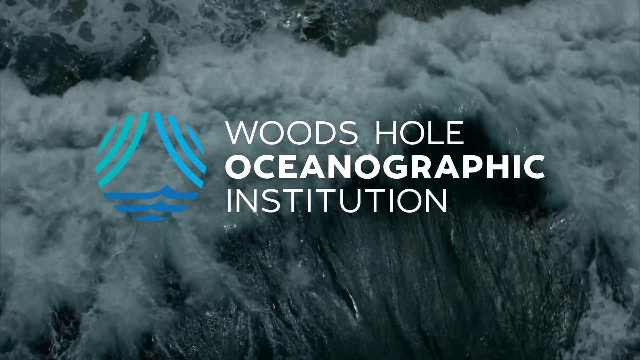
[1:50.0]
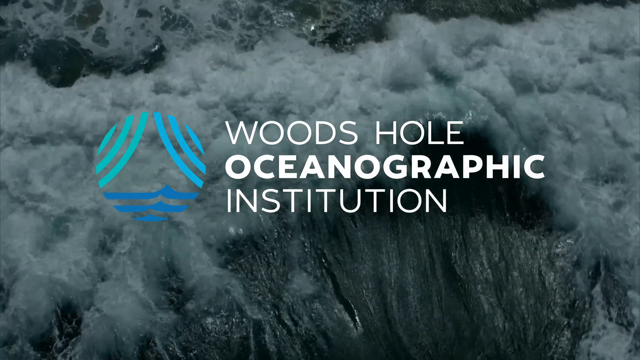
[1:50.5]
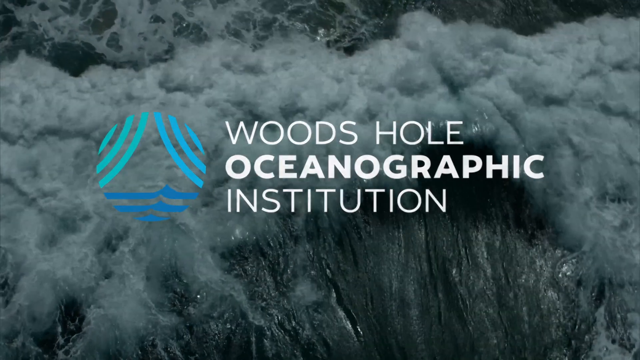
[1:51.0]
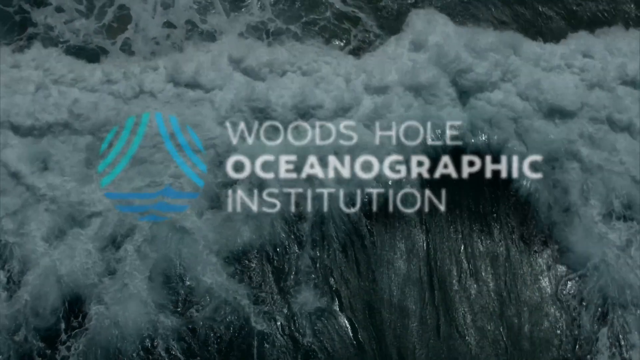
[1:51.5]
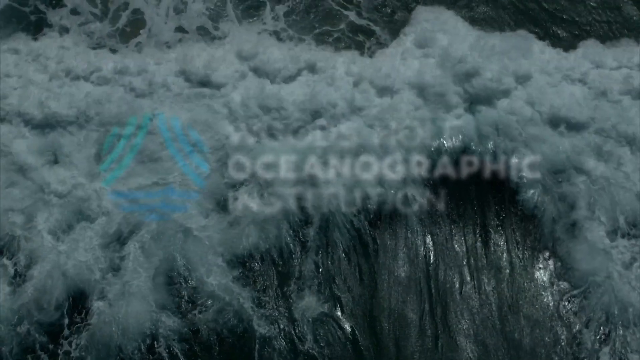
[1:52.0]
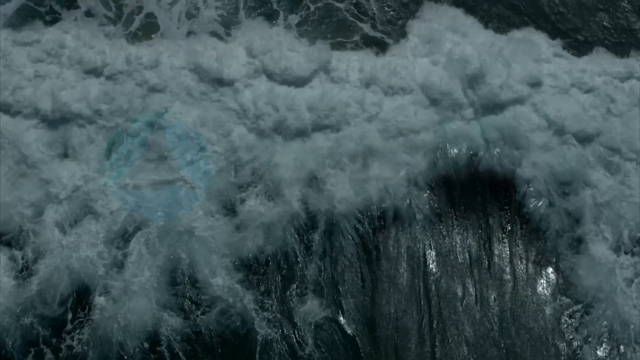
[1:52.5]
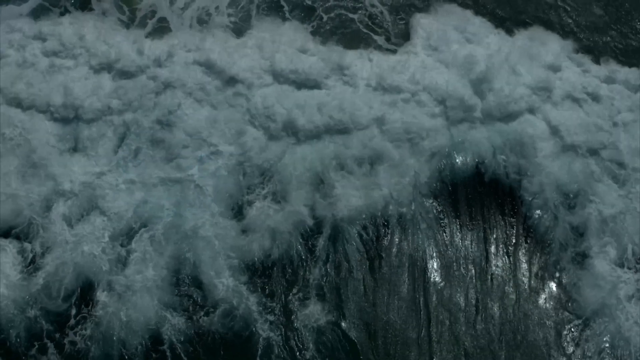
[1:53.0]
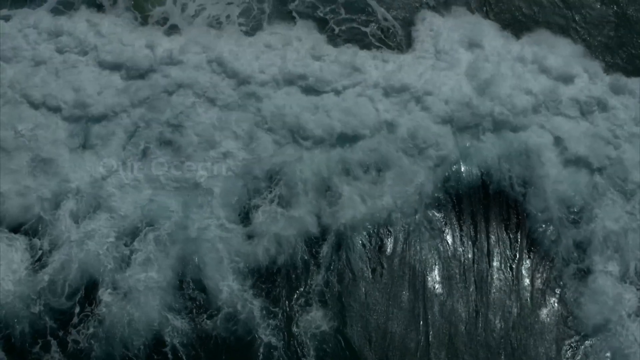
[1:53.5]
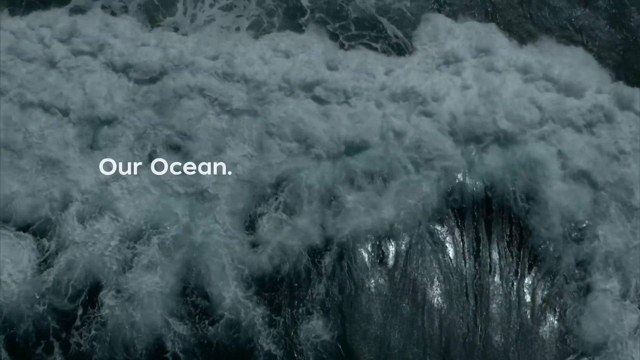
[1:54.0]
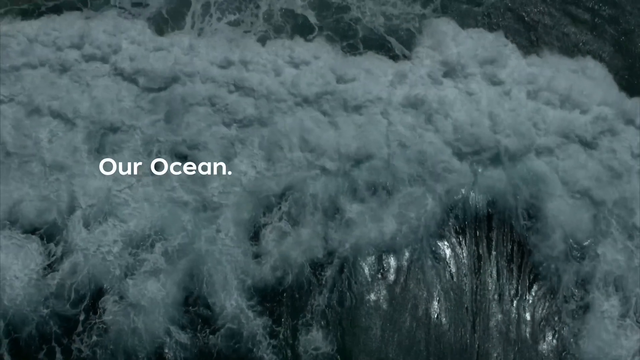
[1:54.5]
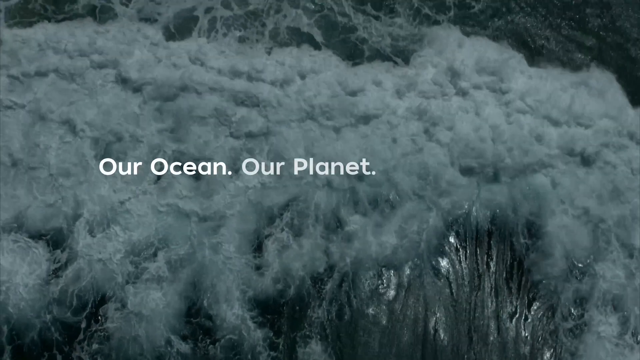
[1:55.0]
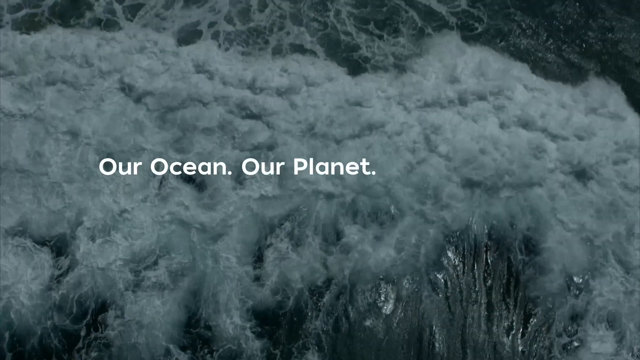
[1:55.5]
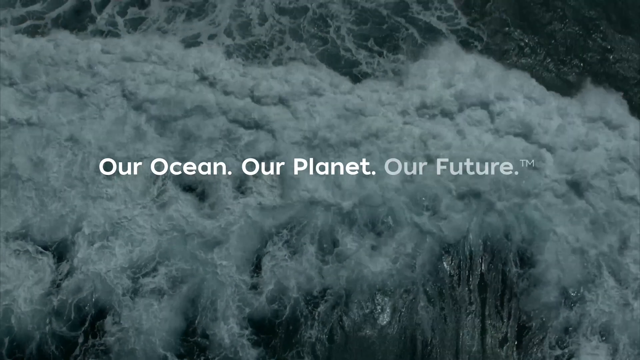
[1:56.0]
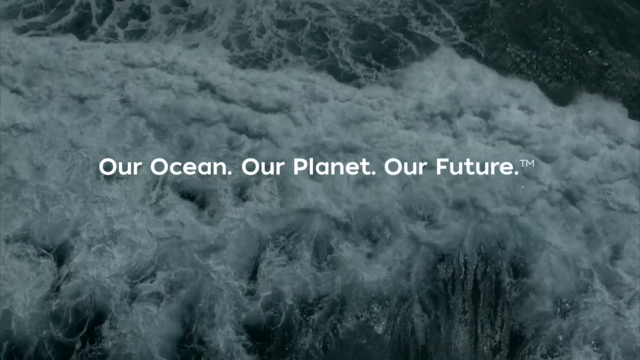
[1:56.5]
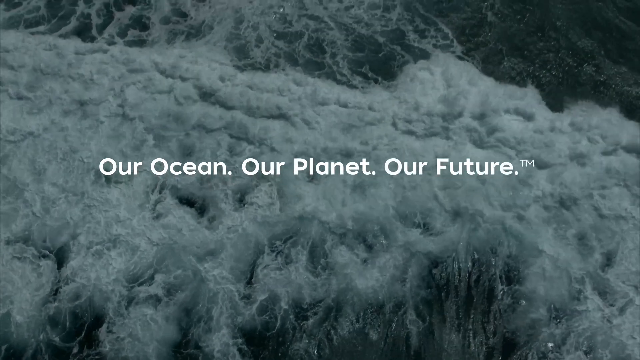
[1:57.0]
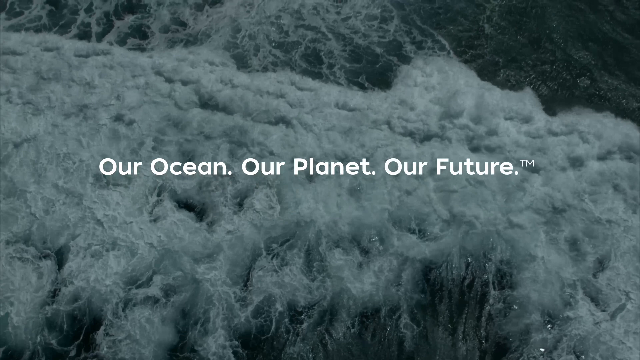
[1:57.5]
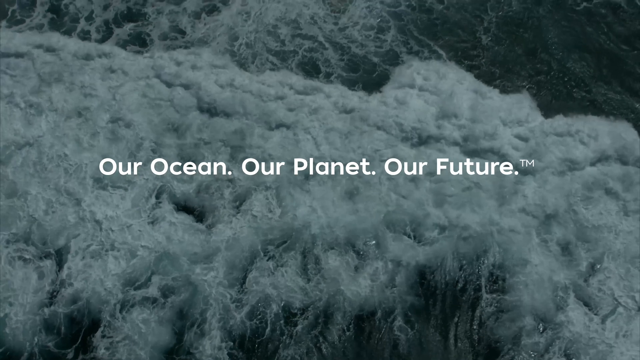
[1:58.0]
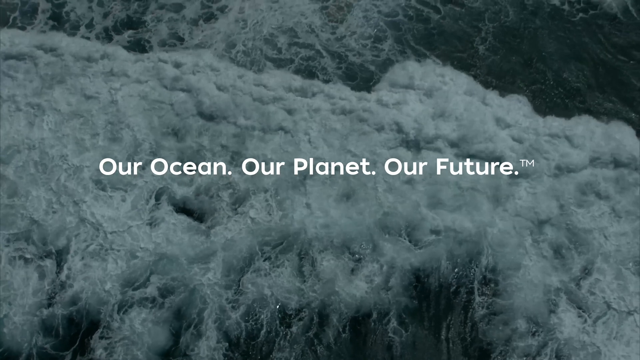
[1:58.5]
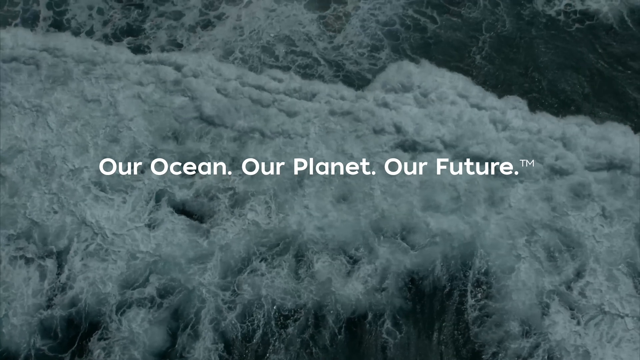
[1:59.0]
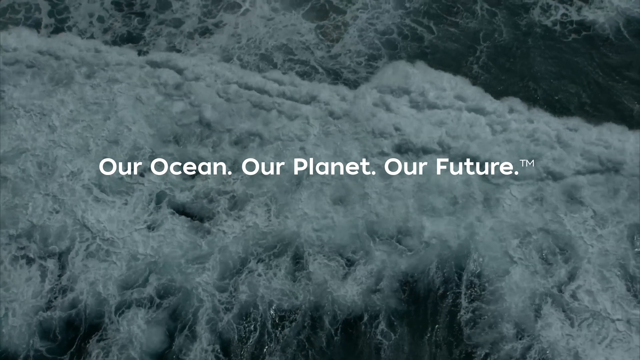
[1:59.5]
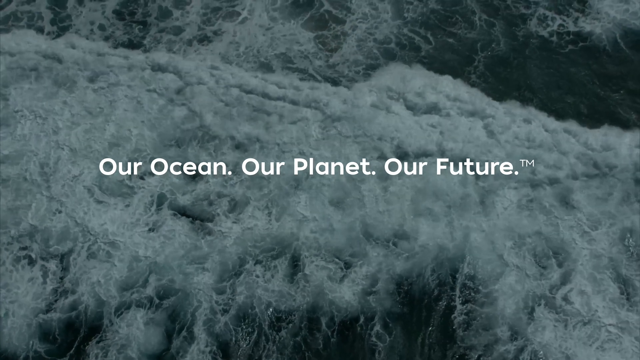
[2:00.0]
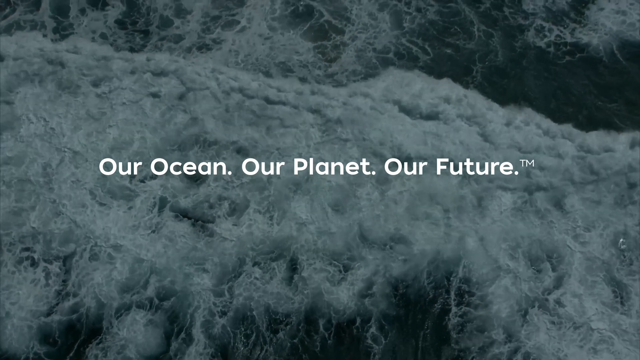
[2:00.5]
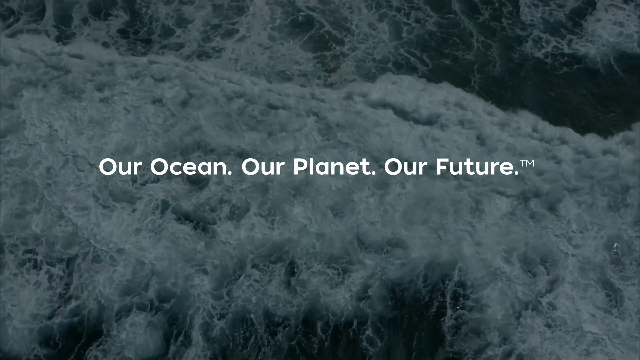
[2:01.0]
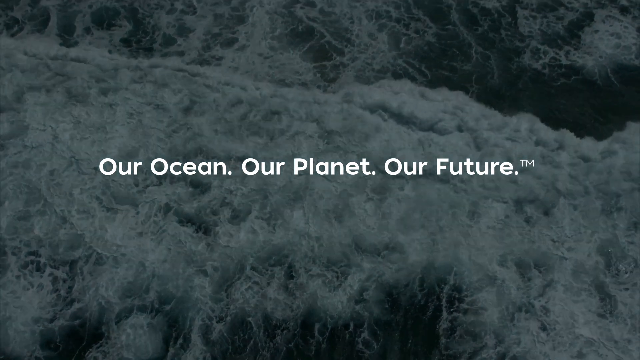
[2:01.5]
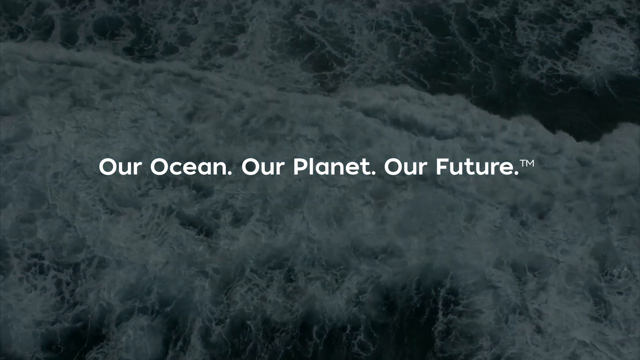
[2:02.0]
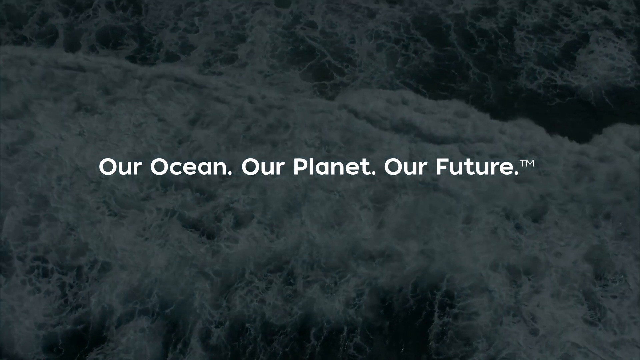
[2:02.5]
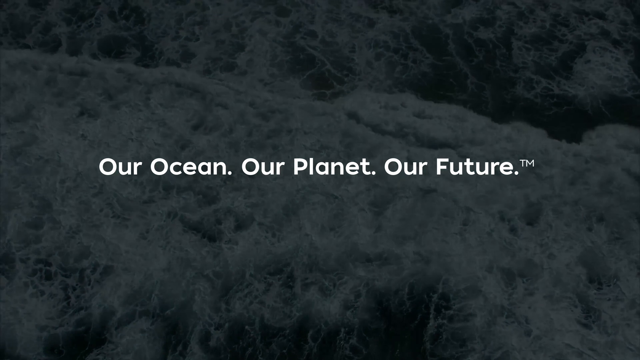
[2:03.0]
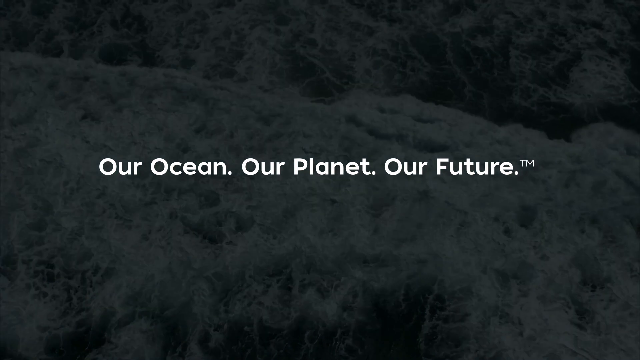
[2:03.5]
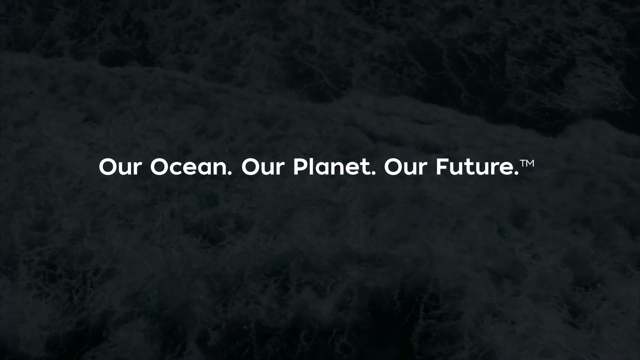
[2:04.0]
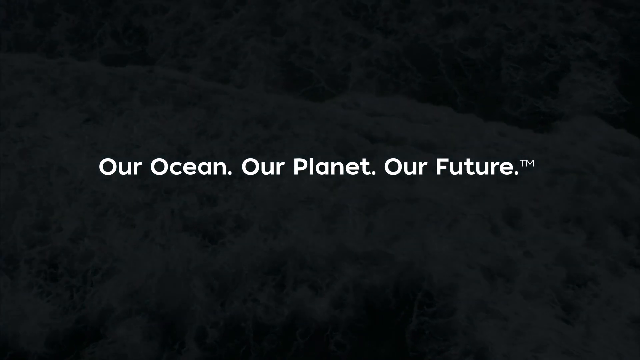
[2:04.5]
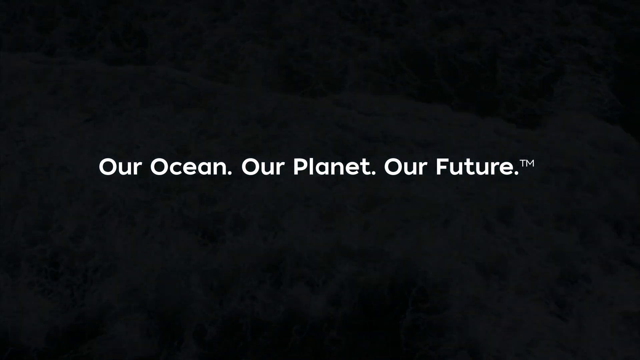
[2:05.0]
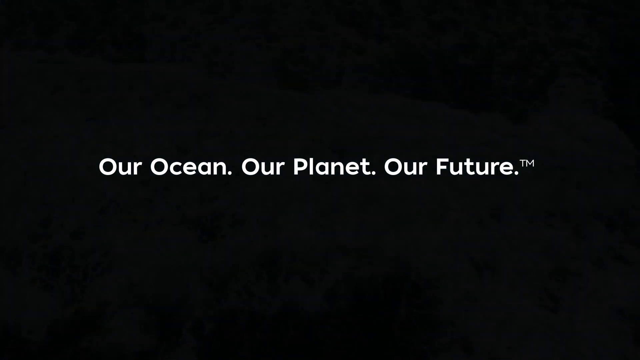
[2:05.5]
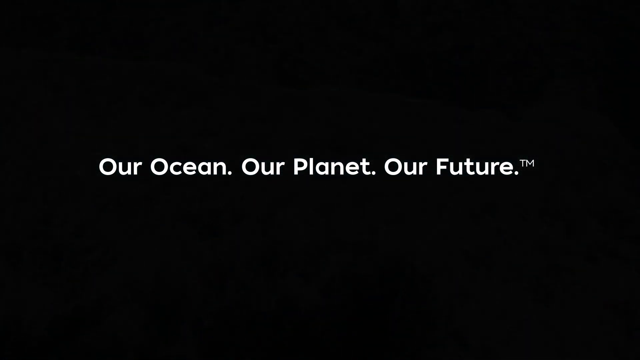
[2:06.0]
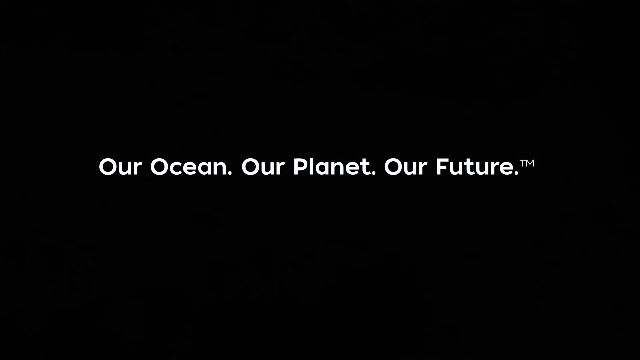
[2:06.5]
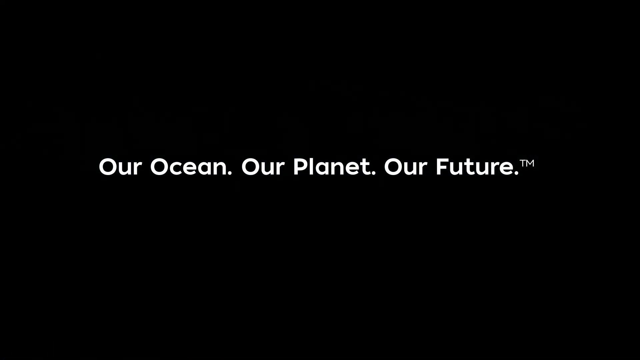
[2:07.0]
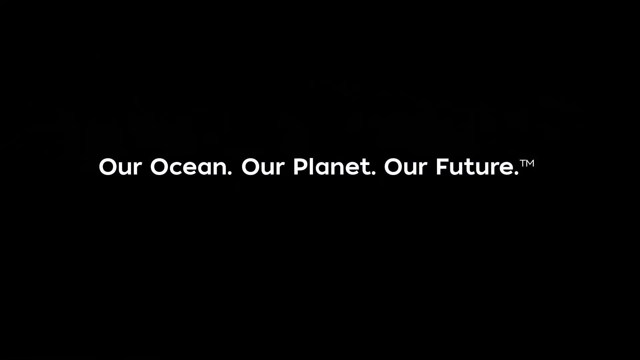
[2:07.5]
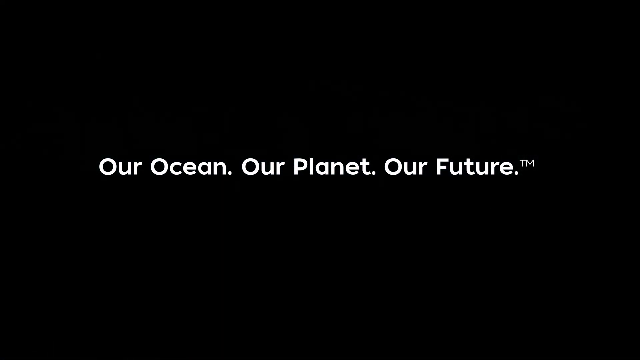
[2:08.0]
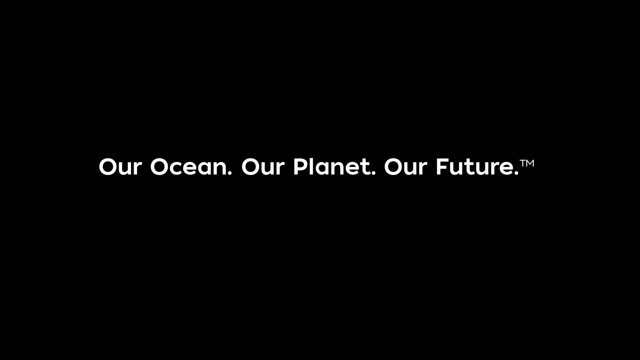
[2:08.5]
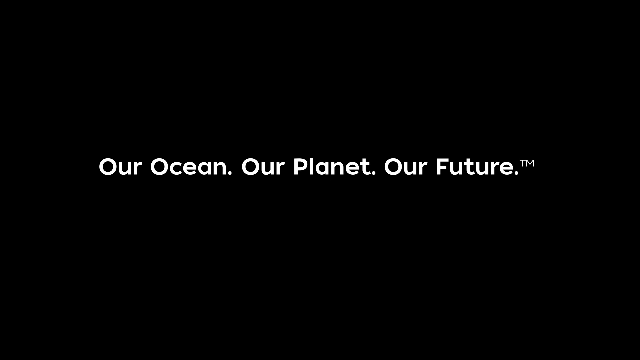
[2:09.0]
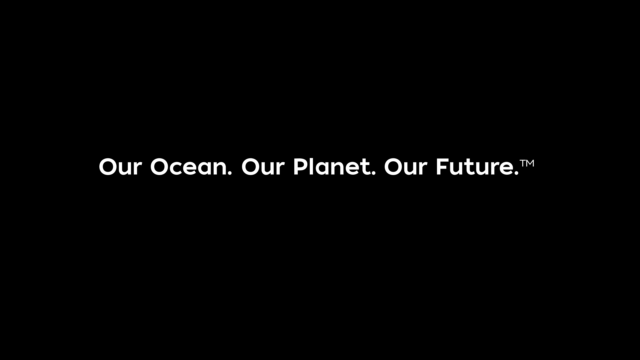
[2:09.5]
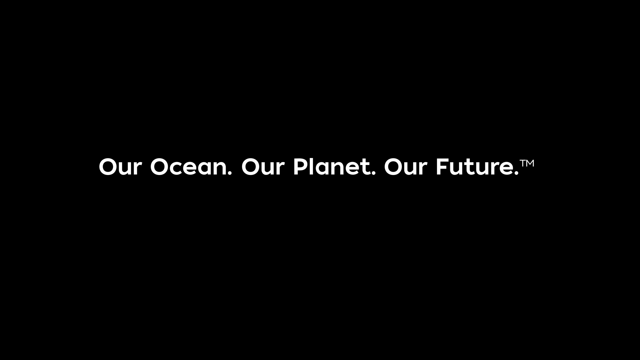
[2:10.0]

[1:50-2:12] Underwater, the animals are shown in their environment, filmed by cameras the researchers have inside the sea. Small sea creatures that look like tiny worms are on an area. At the end, a big heading reads "Woods Hole Oceanographic Institution" over a sea background with strong waves. The video ends with "our ocean, our planet, our future."